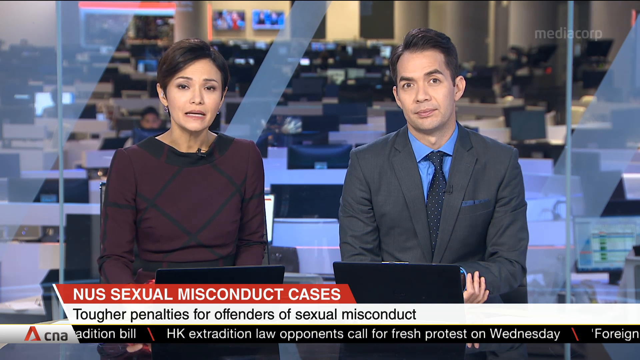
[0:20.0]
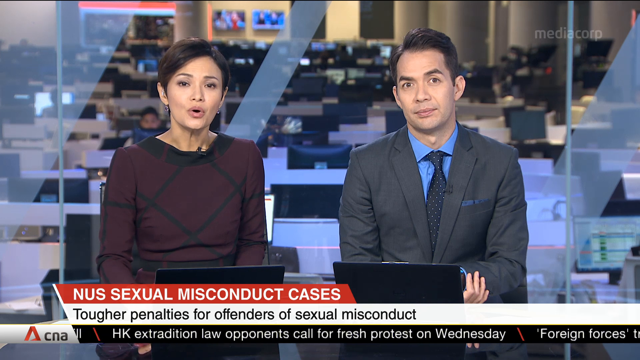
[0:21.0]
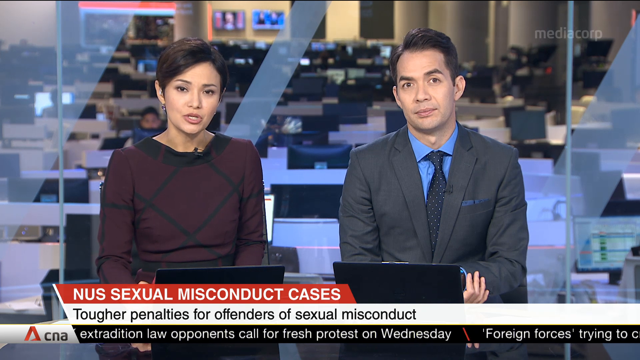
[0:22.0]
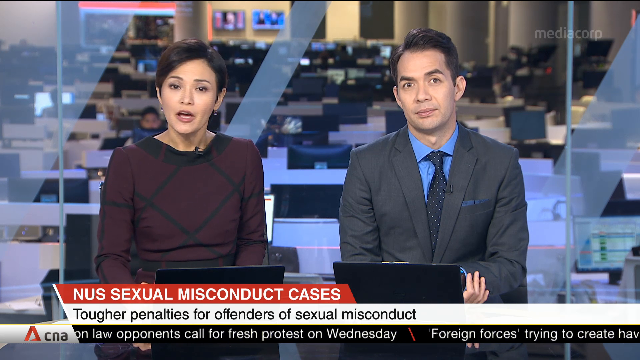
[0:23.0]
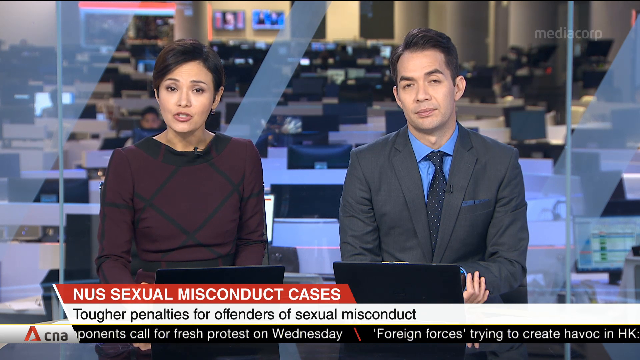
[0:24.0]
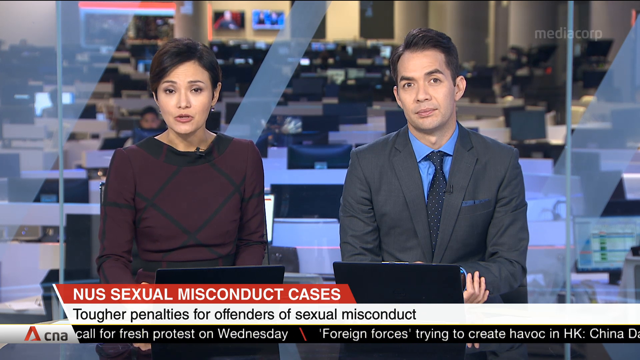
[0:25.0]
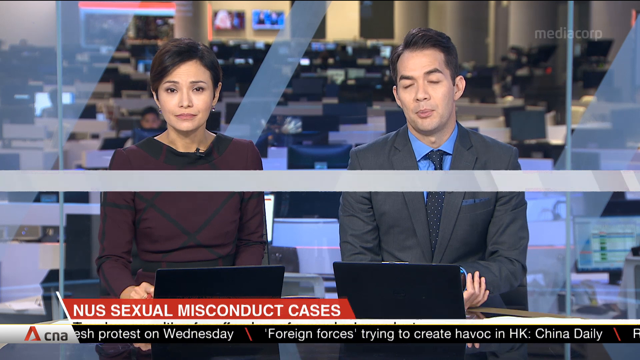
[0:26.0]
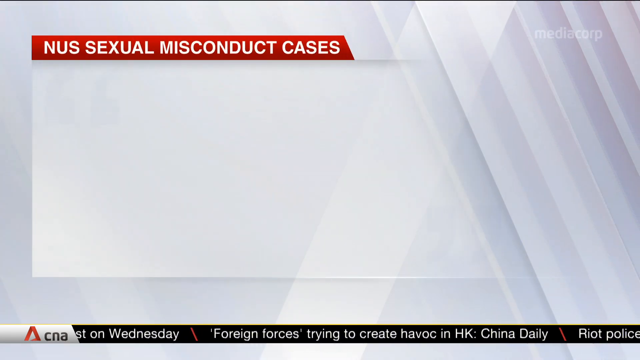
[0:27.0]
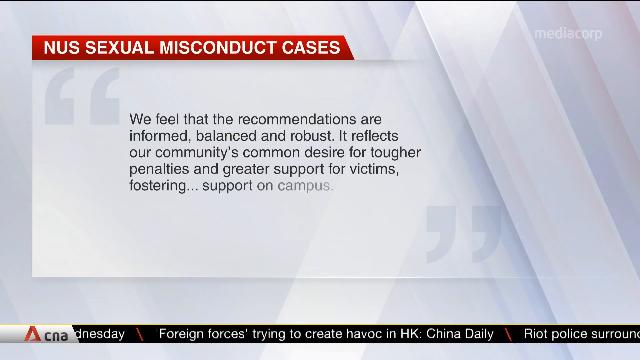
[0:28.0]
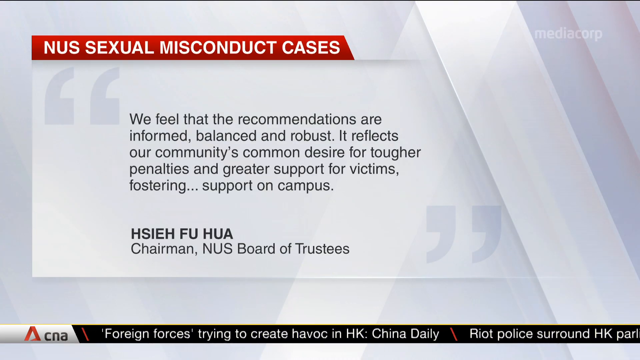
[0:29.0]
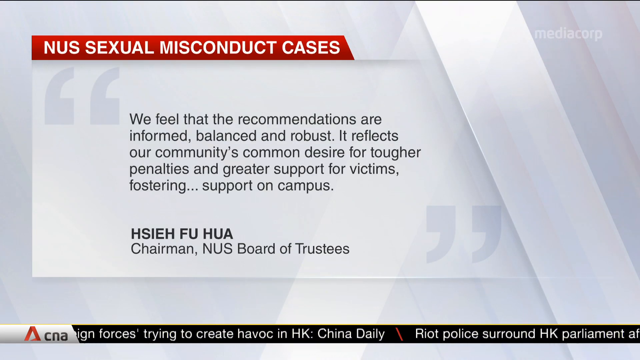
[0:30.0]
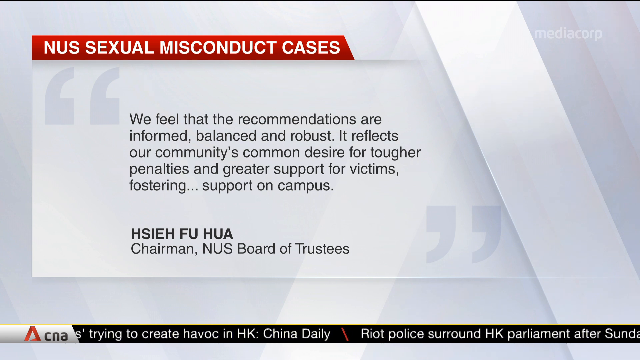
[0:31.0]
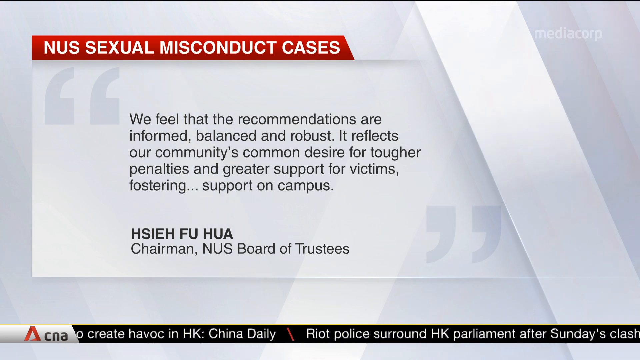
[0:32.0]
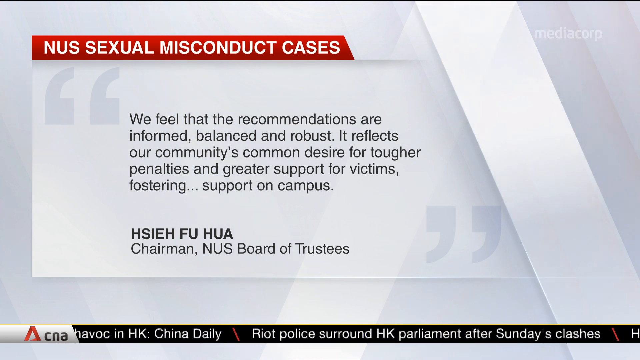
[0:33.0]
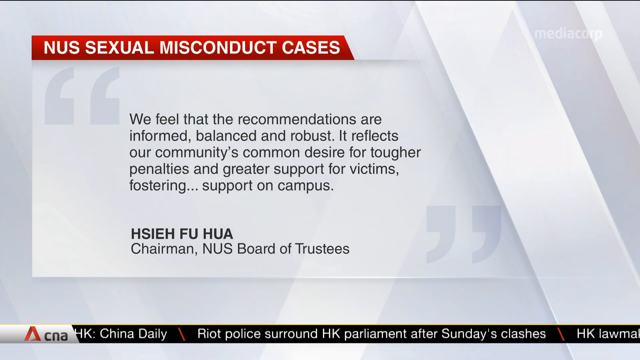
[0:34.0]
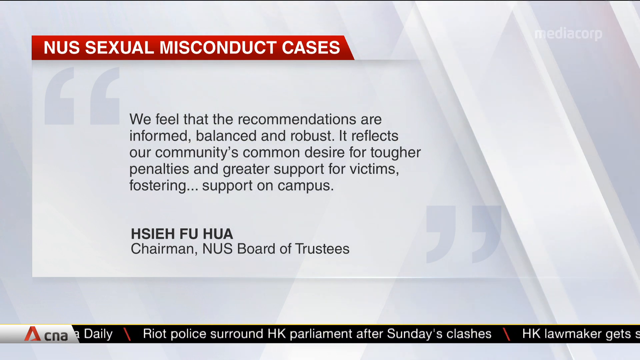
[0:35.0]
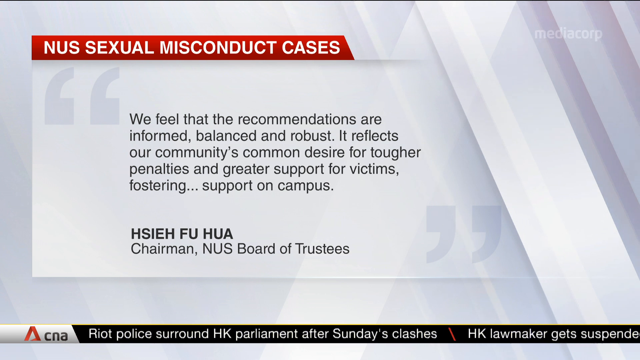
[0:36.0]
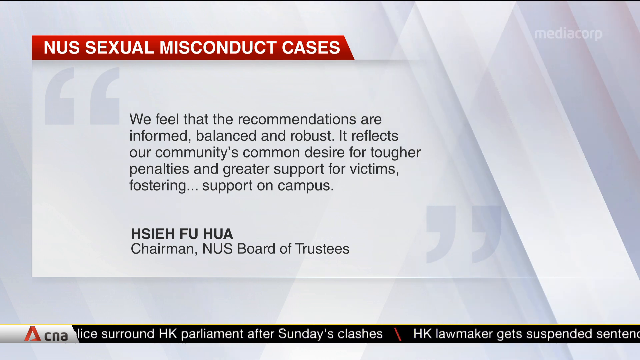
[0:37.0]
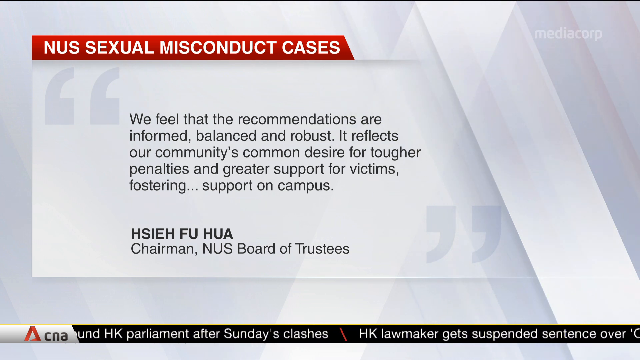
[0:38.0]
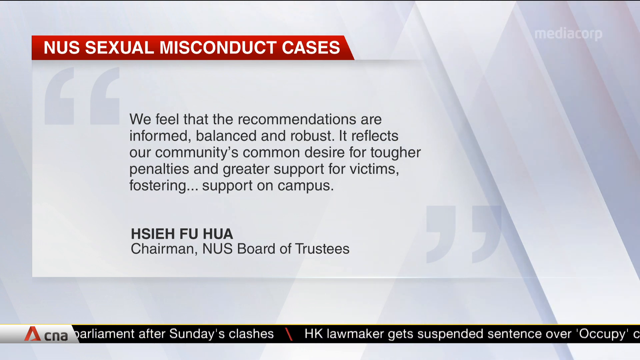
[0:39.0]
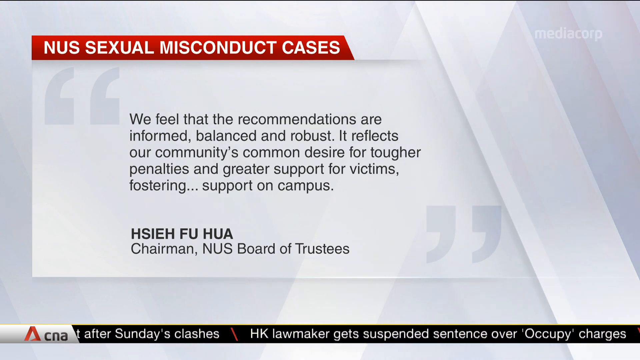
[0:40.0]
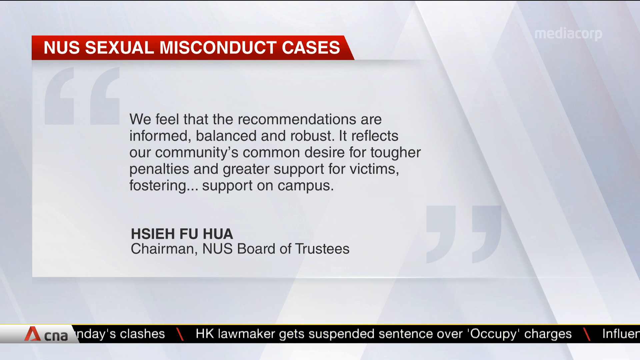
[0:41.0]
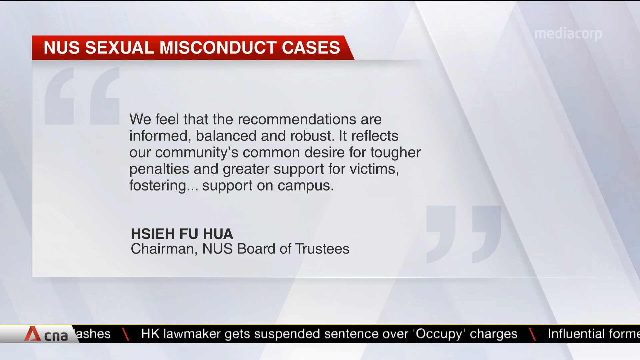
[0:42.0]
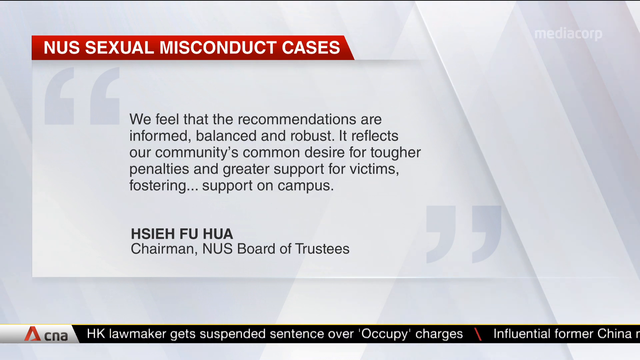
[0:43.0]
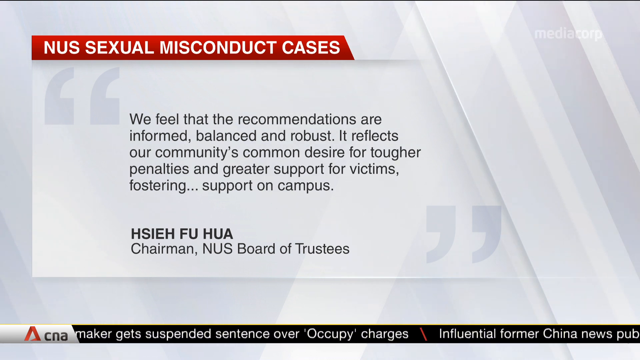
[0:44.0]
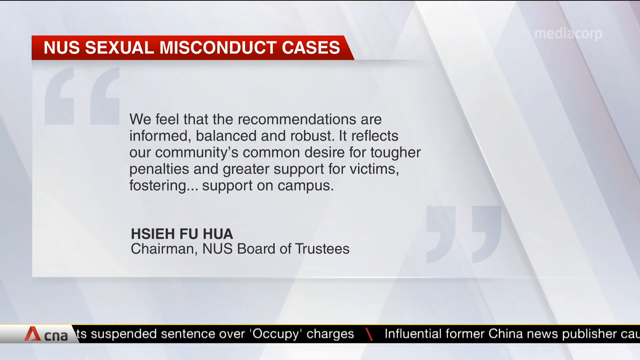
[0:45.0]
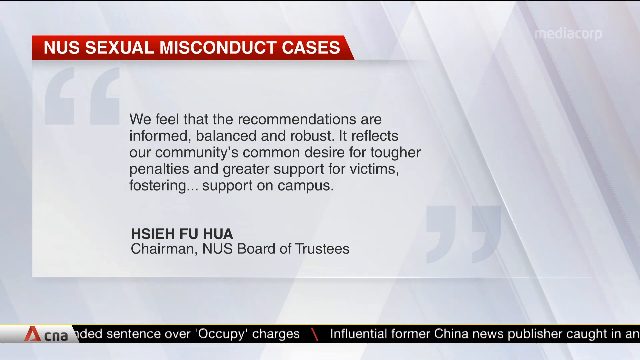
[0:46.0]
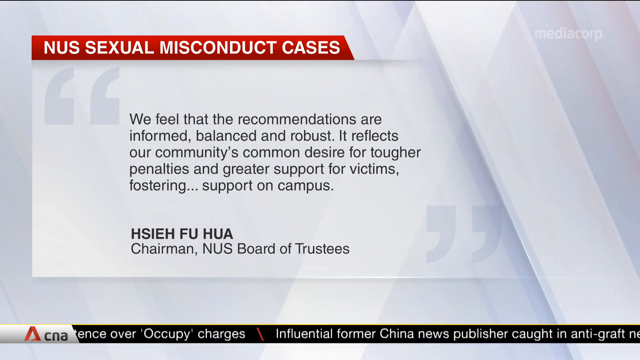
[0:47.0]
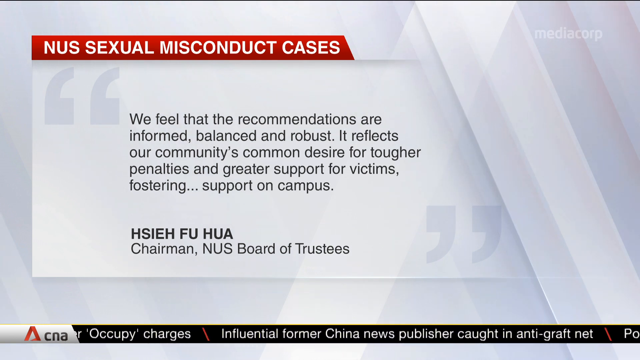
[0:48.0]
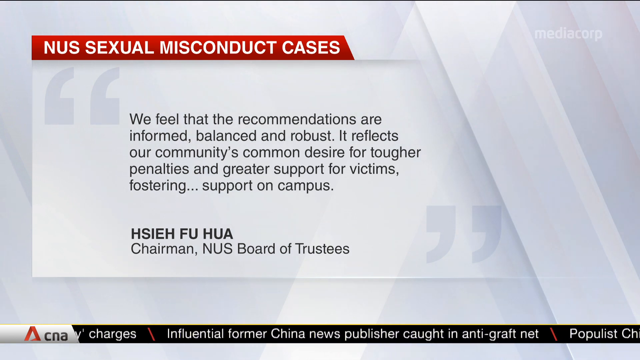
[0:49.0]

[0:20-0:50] Two news readers, a man and a woman, are shown in what appears to be a newsroom. The woman wears a maroon top with black lines, while the man wears a black suit, a blue shirt and a dark blue tie with white polka dots. Behind them are many laptops in what seems to be a workspace, with only one person working. The woman talks into the microphone, and the news topic shown is "NUS sexual misconduct cases" with "tougher penalties for offenders of sexual misconduct." Text then appears reading: "We feel that the recommendations are informed, balanced and robust. It reflects our community's common desire for tougher penalties and greater support for victims fostering support on campus." Underneath it is "Chairman NUS Board of Trustees."